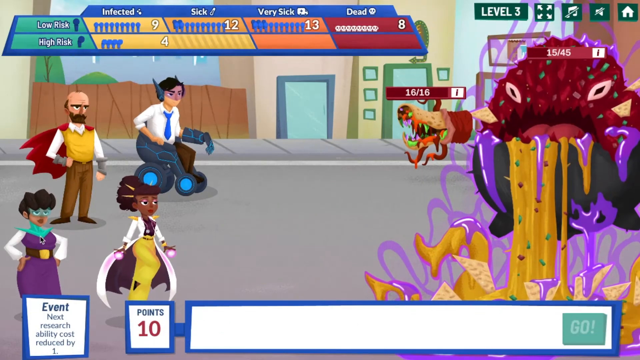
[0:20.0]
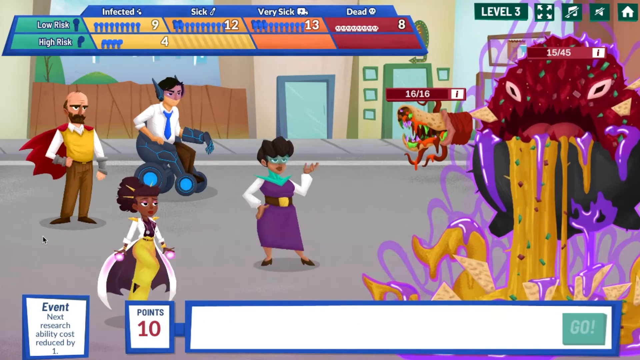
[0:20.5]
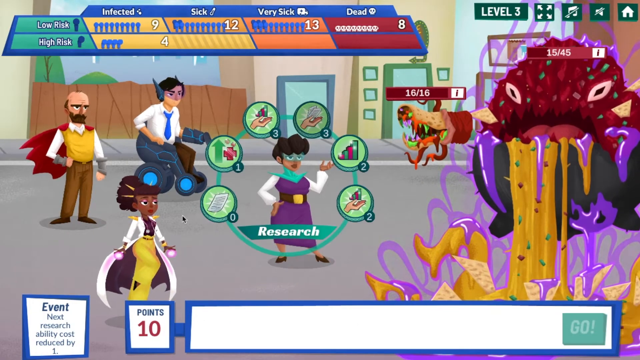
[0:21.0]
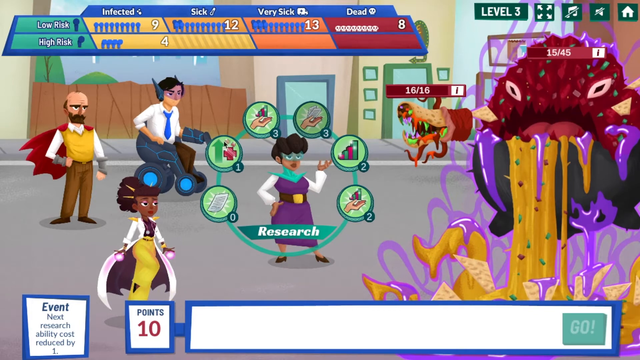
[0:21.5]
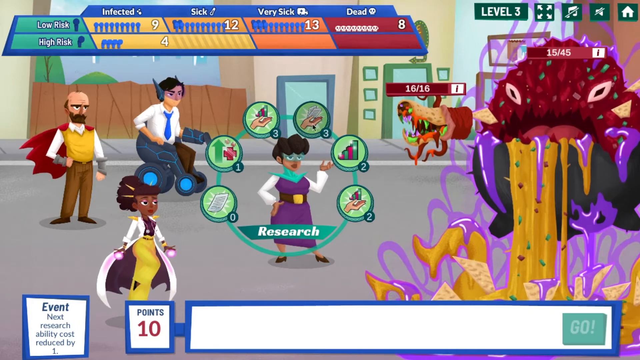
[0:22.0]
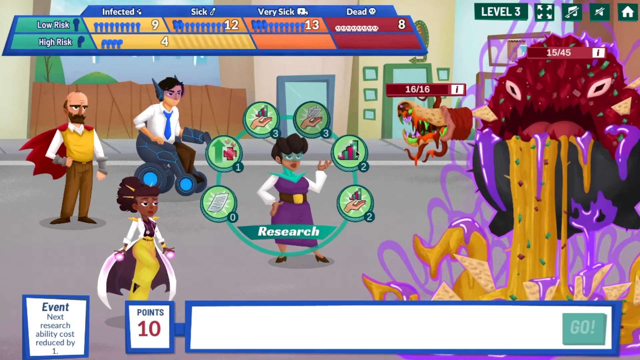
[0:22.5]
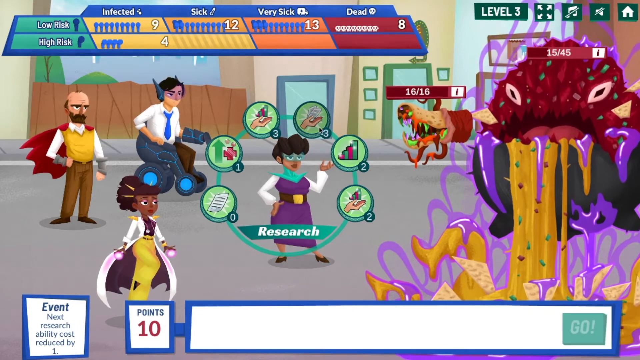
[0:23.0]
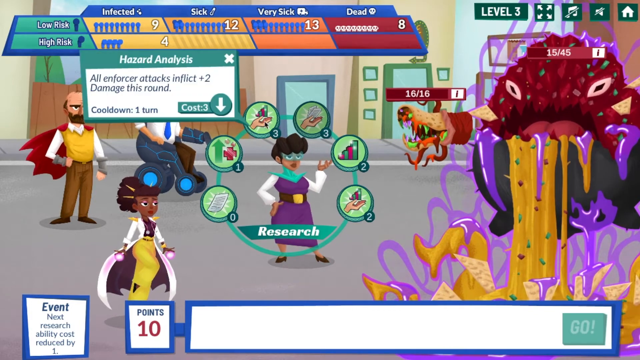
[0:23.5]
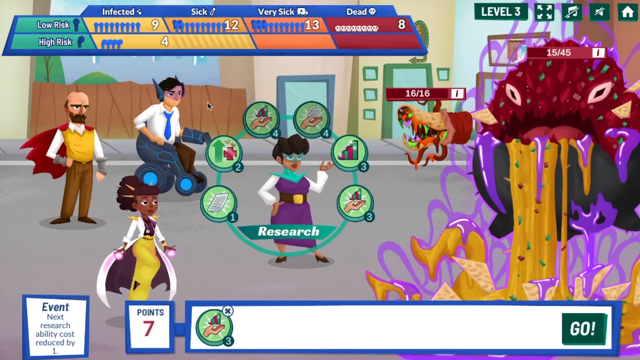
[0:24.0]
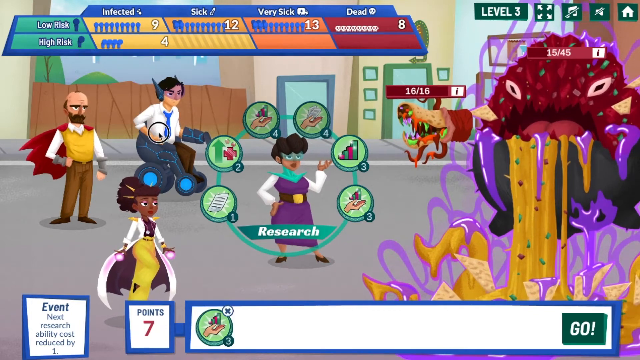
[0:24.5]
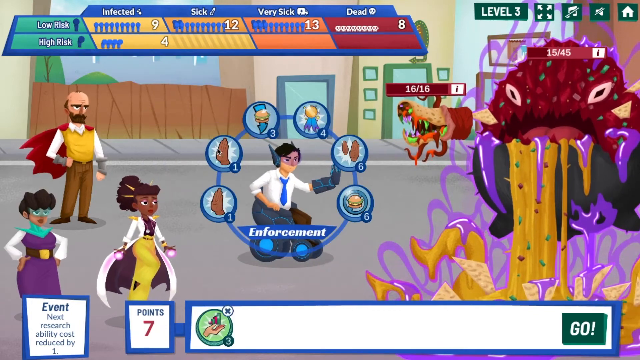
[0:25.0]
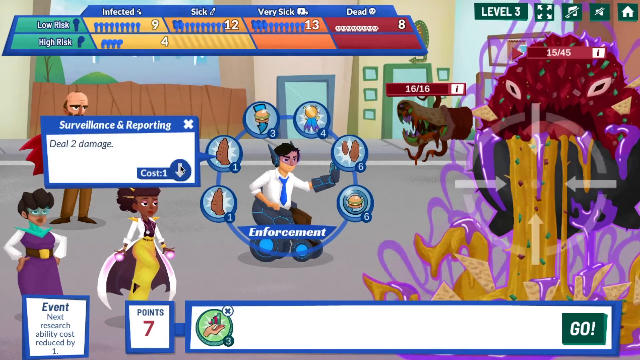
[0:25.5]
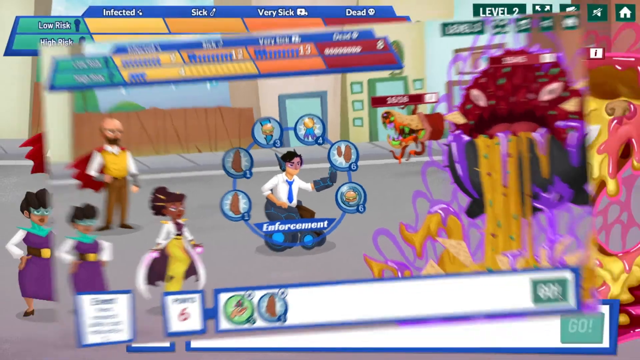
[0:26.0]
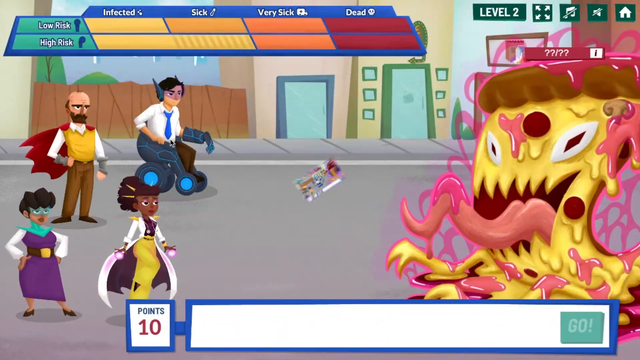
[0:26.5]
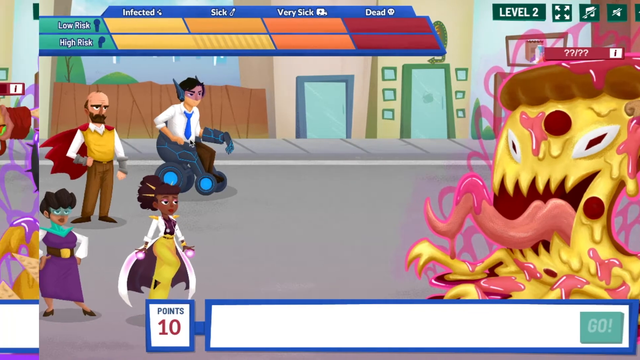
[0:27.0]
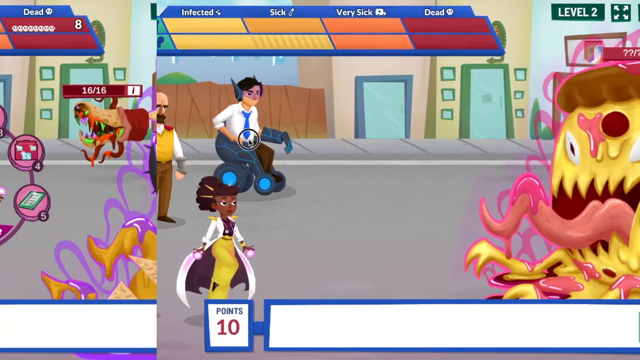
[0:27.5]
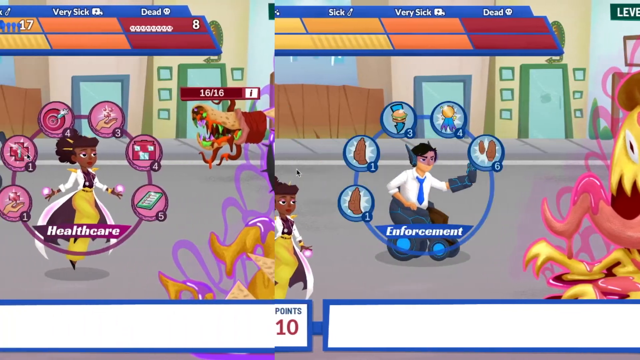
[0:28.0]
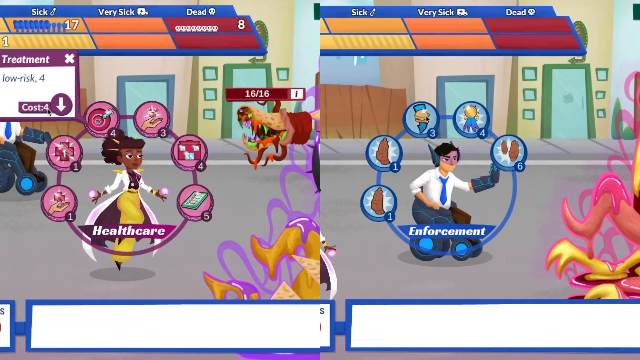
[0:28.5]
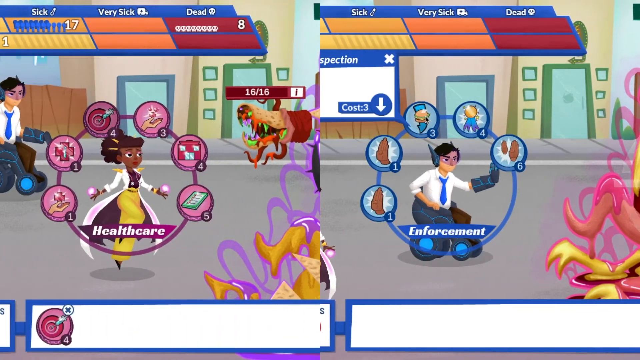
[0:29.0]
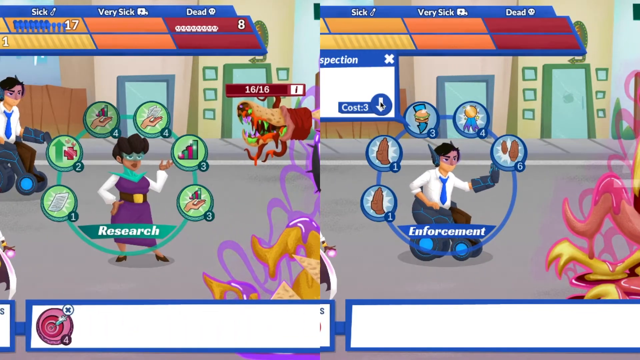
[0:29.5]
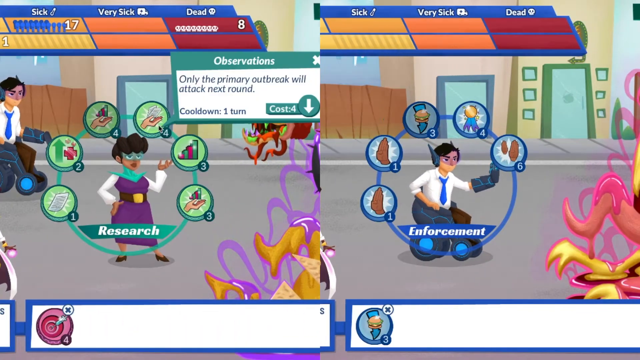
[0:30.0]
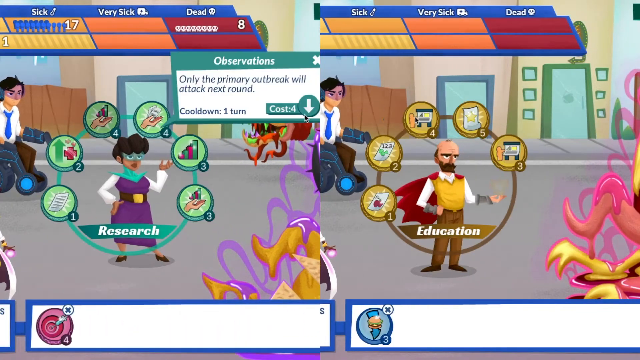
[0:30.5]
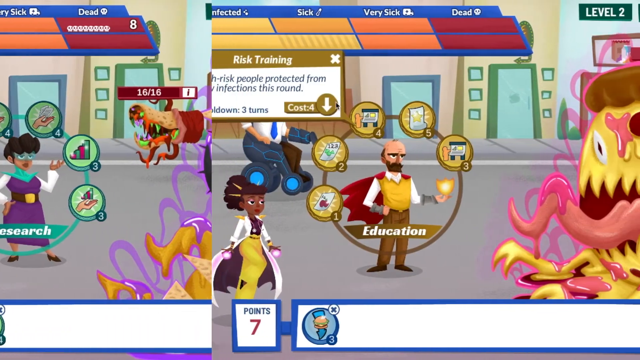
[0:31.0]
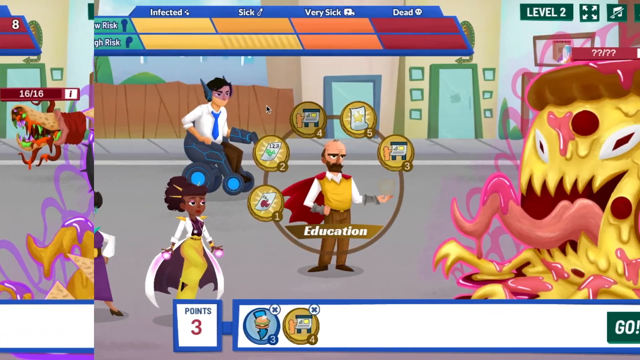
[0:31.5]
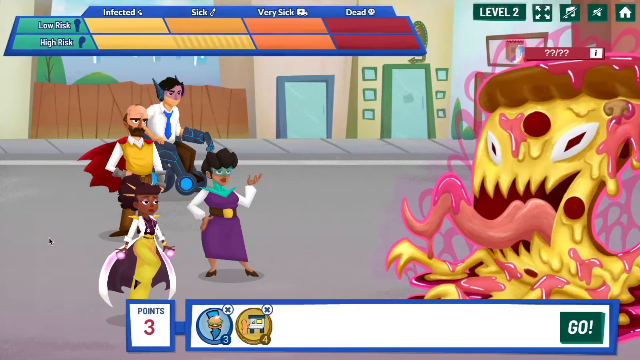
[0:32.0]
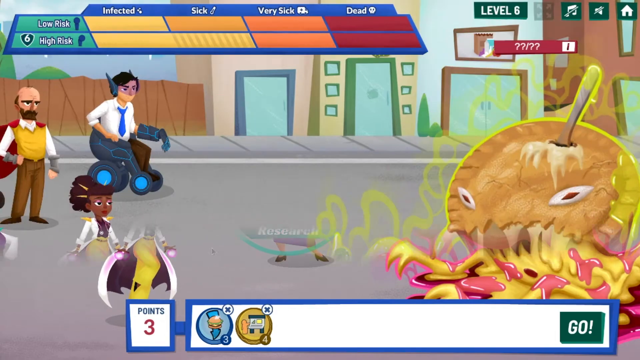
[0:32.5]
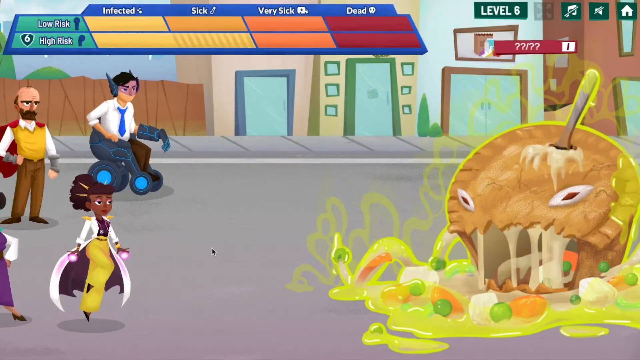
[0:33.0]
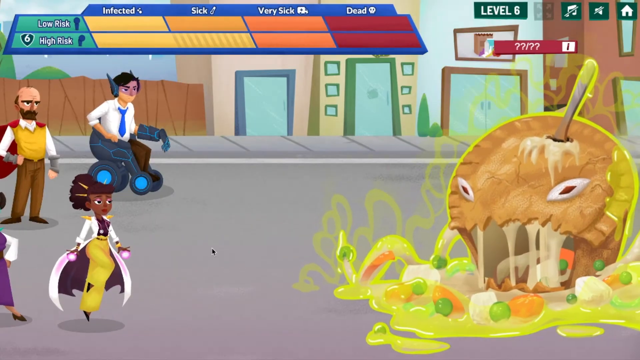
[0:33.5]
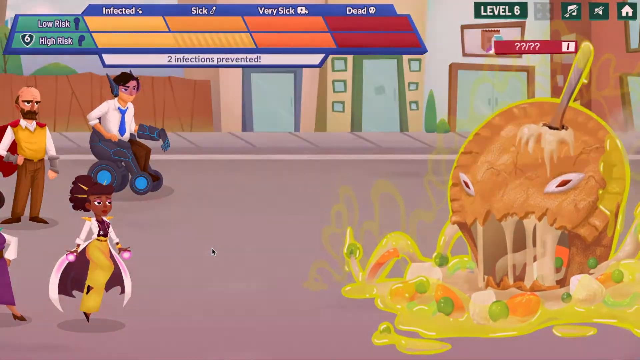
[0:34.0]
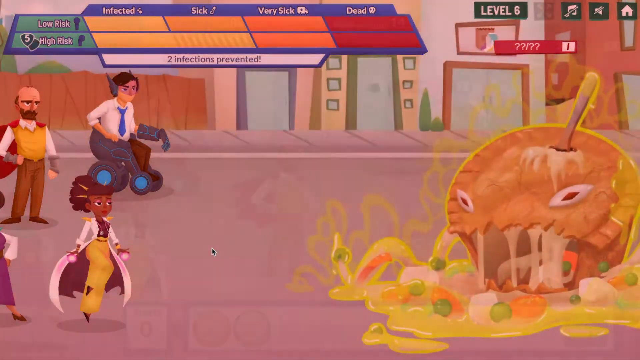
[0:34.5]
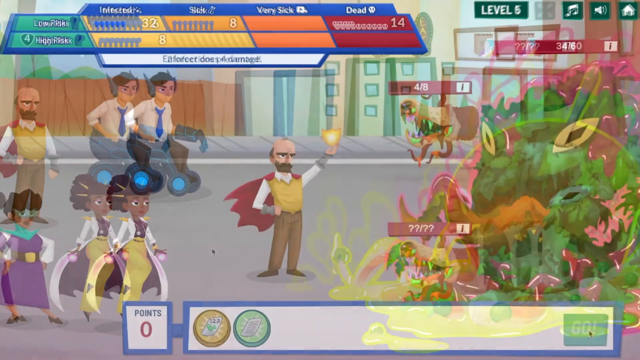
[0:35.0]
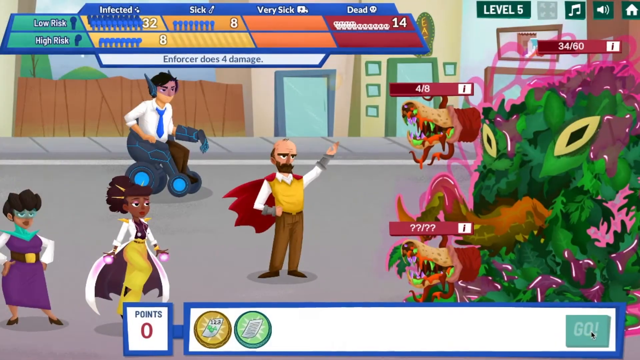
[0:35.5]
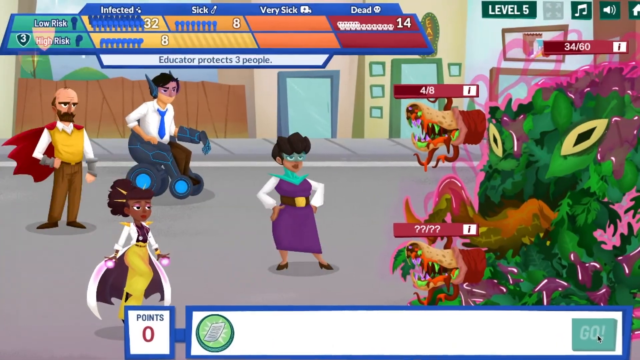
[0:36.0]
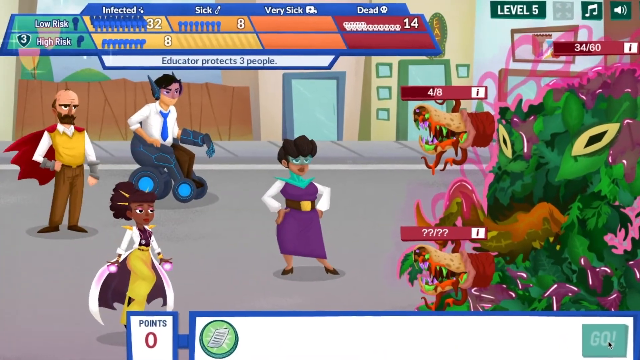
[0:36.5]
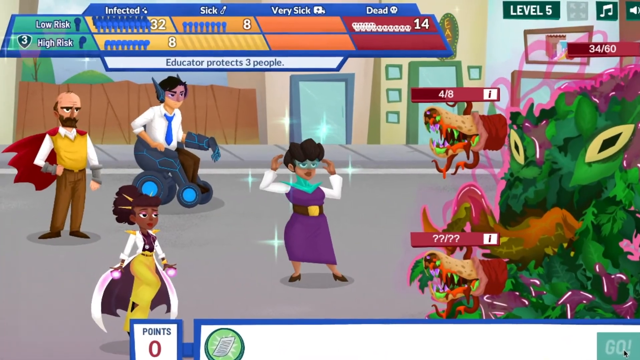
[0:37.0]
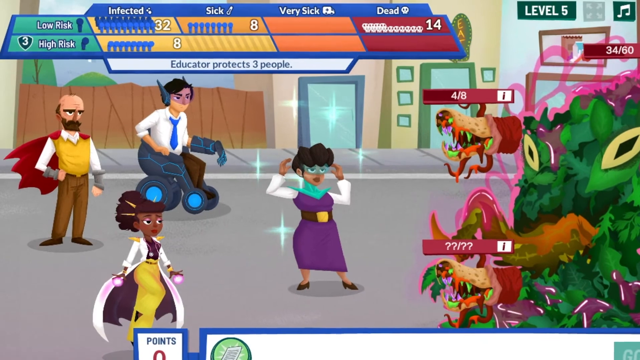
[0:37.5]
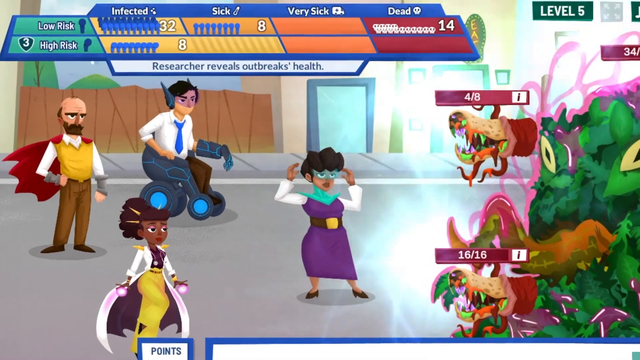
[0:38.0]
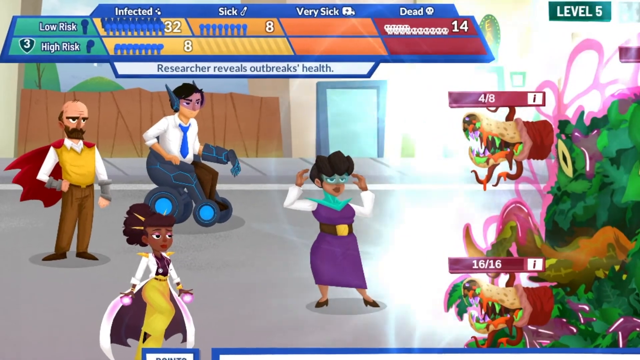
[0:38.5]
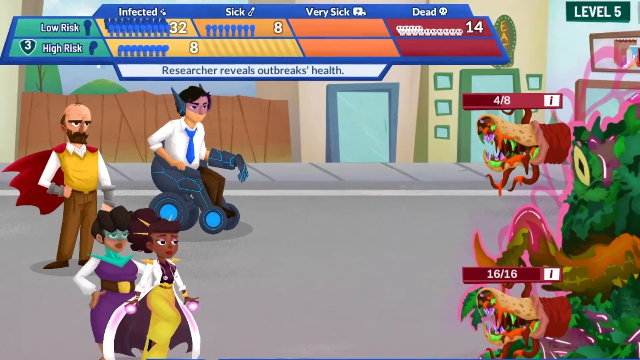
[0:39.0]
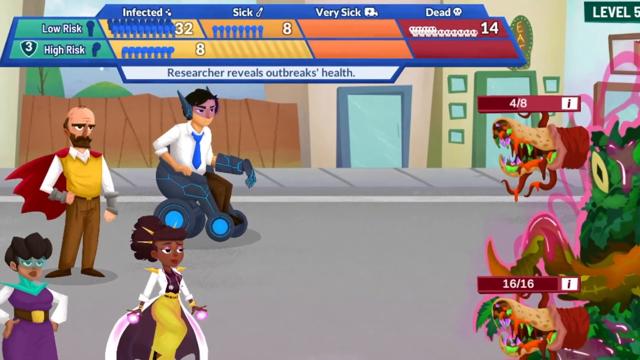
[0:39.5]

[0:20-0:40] The superheroes are on the left half of the screen, with some sort of bacteria-laden super villain on the right side. Research takes centre stage with a number of tools around her, whose meaning is unclear. At the top of the screen is a graphic with two lines, low risk and high risk, with further subheadings stretching across the screen to the right above them: infected, sick, very sick and dead. Below is a sort of street scene with the individuals all set up to fight the common enemy, disease. Enforcement moves to center stage, and points seem to be given for various actions. Then Healthcare and Enforcement split the screen between them, with their characteristics featured on a circular graphic around their images.